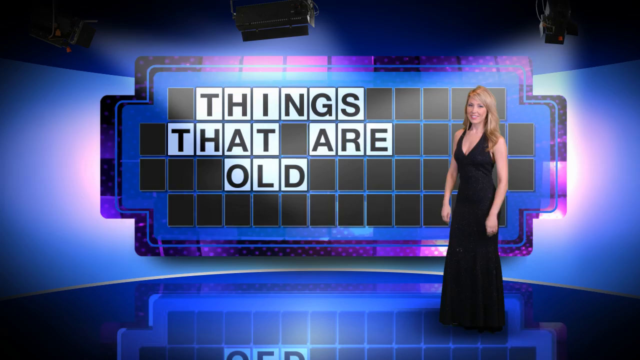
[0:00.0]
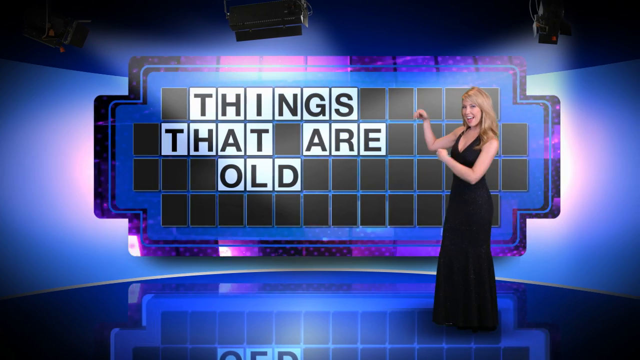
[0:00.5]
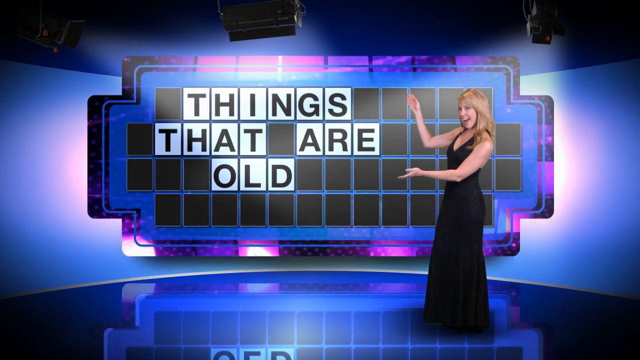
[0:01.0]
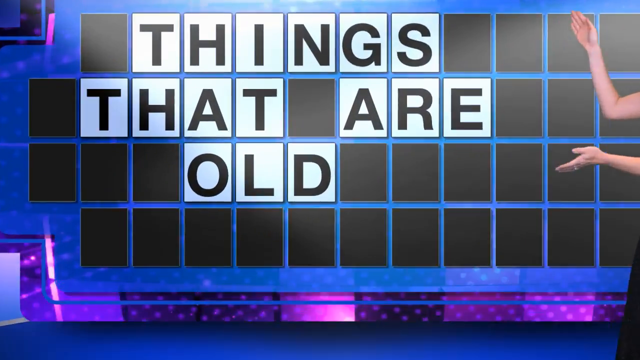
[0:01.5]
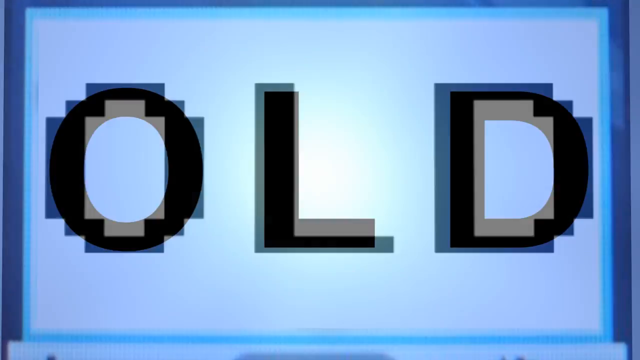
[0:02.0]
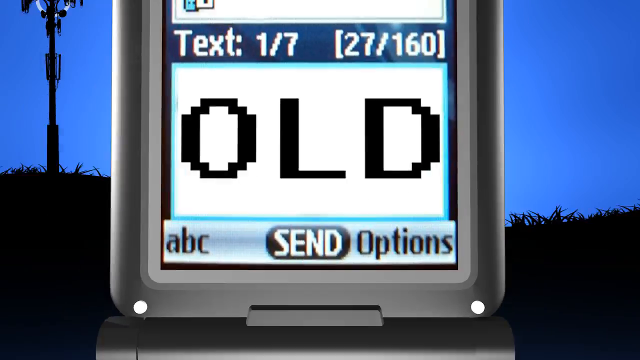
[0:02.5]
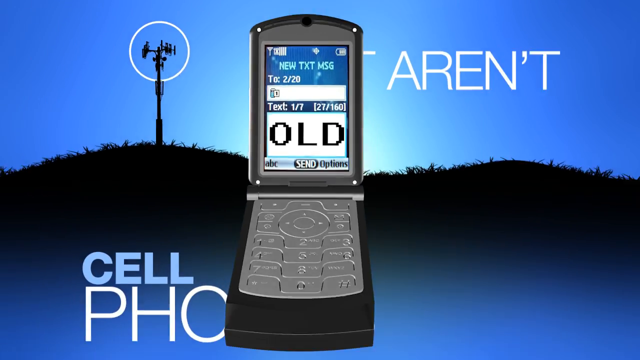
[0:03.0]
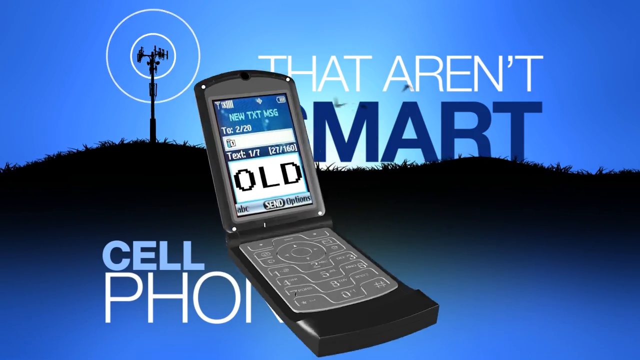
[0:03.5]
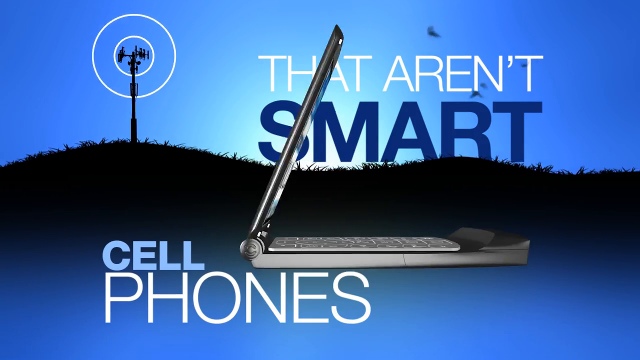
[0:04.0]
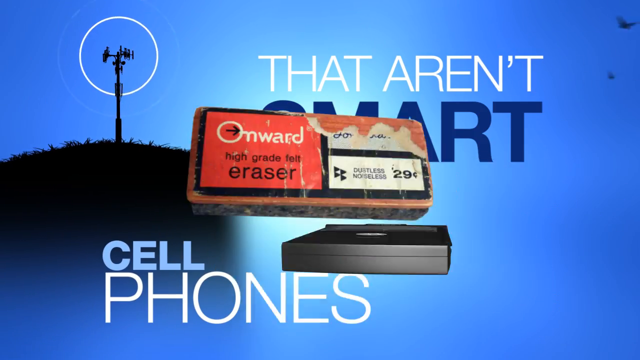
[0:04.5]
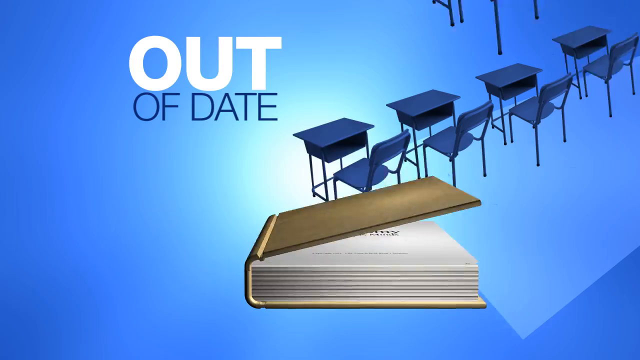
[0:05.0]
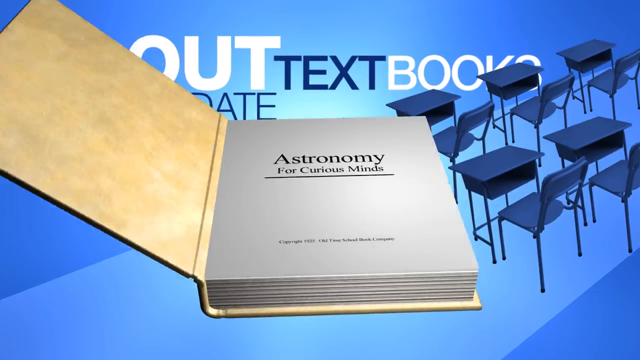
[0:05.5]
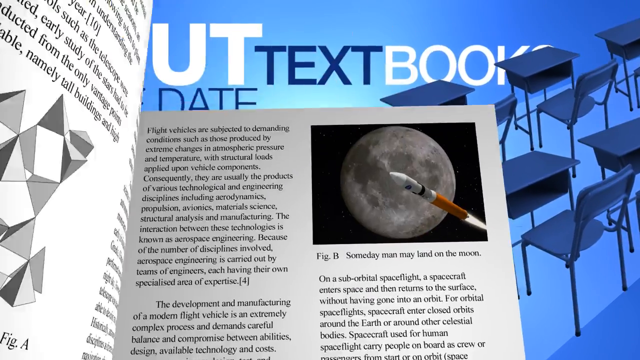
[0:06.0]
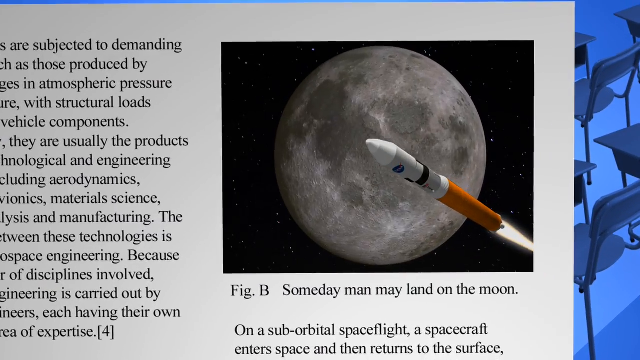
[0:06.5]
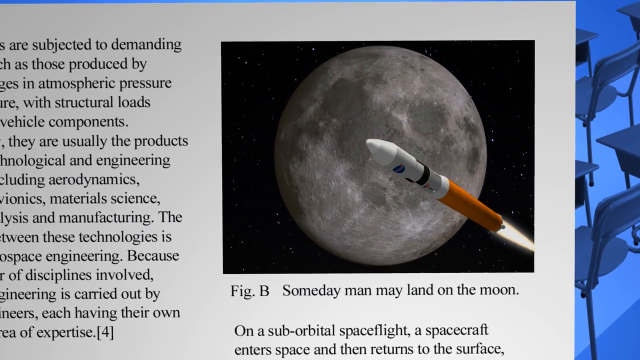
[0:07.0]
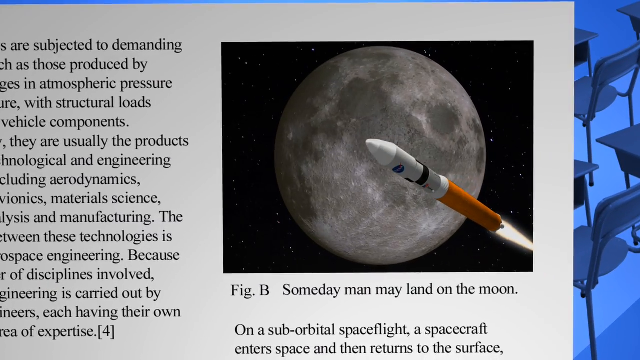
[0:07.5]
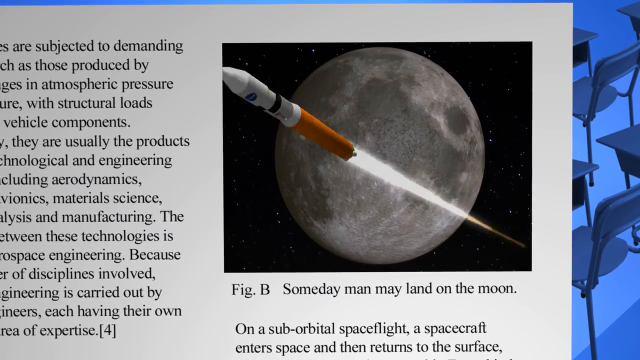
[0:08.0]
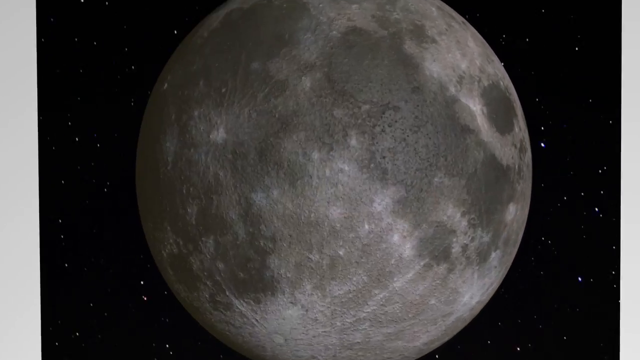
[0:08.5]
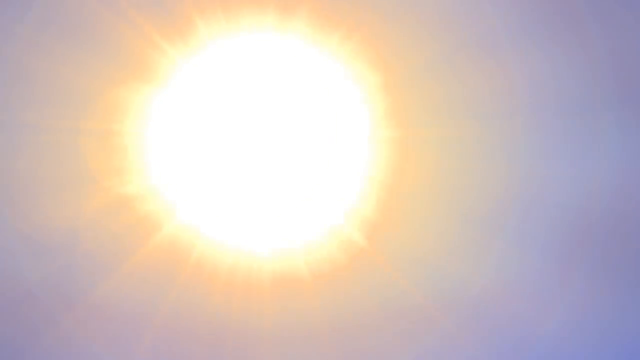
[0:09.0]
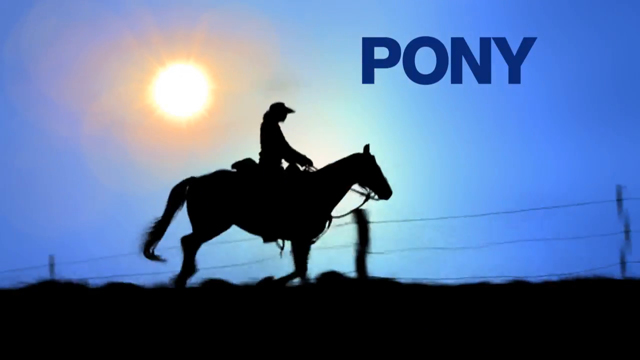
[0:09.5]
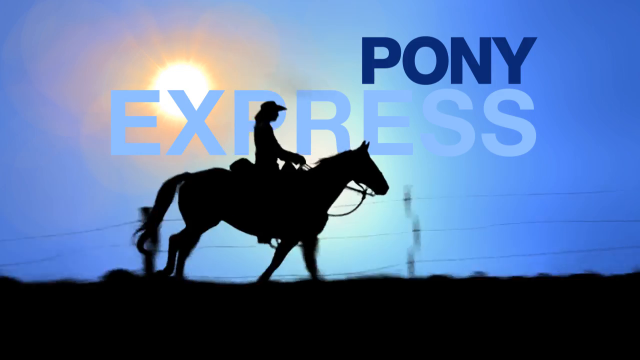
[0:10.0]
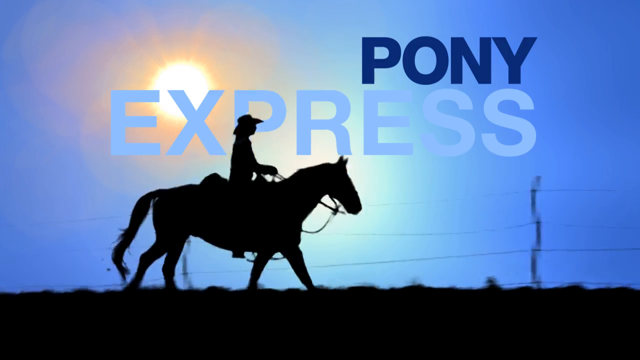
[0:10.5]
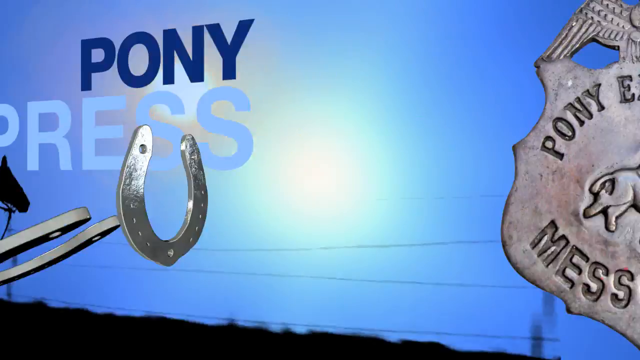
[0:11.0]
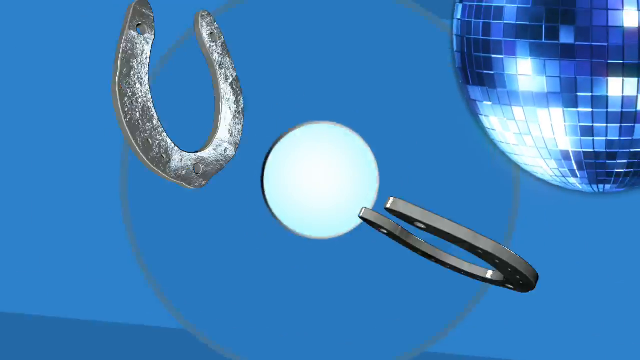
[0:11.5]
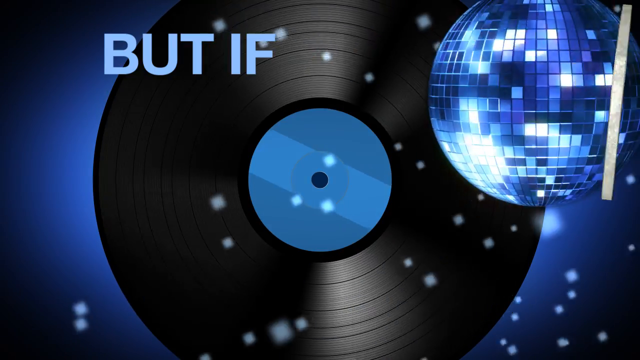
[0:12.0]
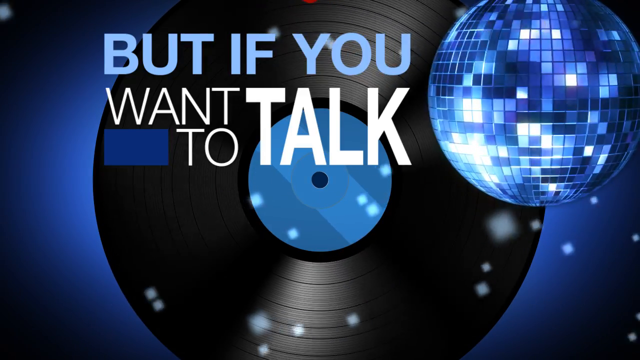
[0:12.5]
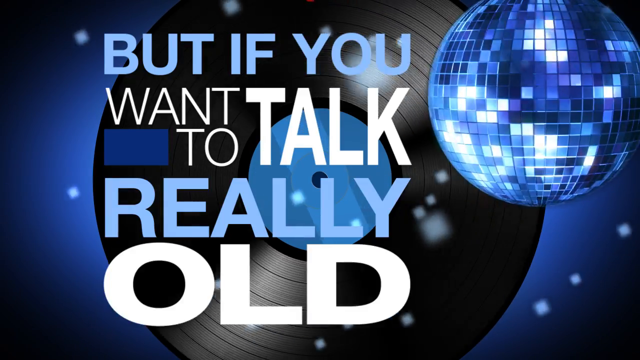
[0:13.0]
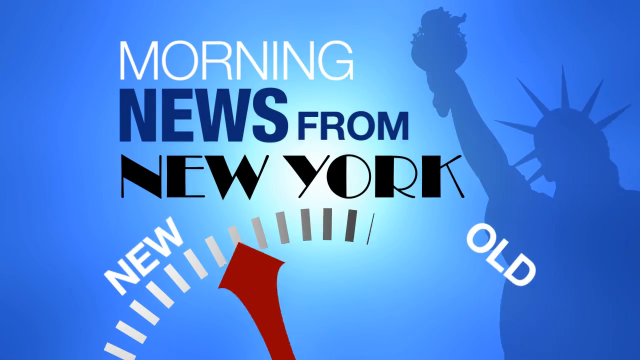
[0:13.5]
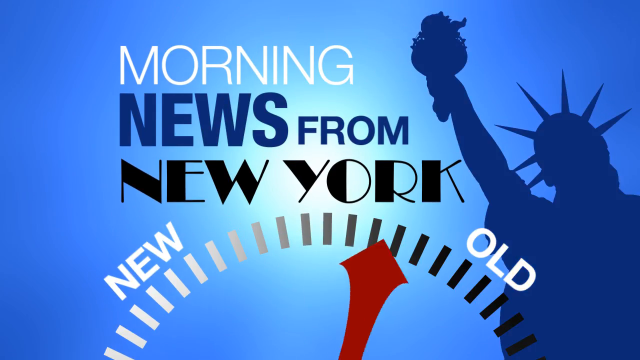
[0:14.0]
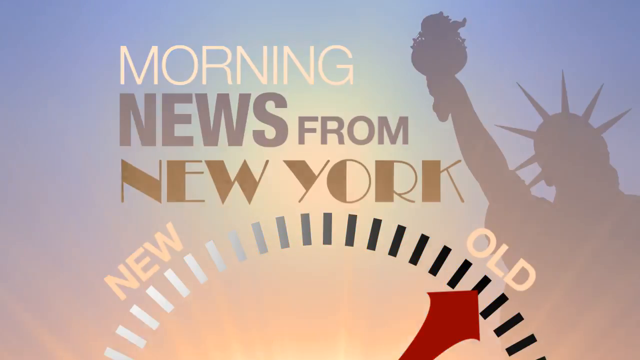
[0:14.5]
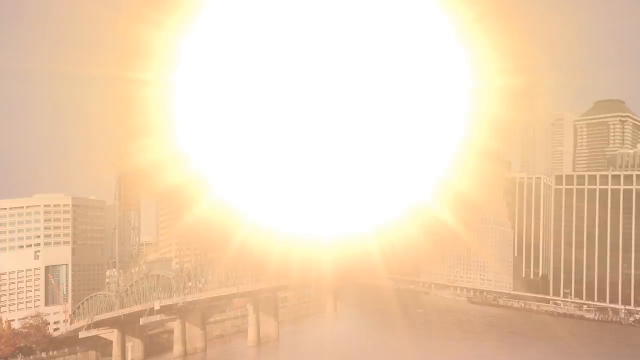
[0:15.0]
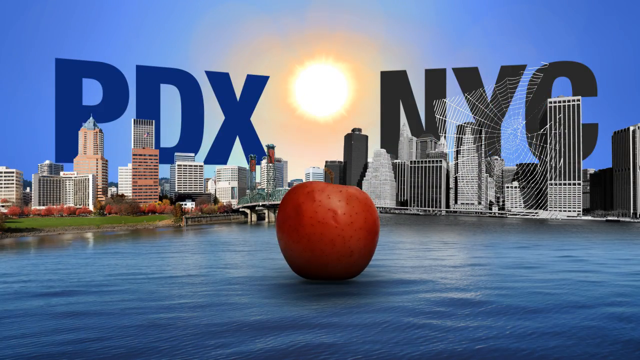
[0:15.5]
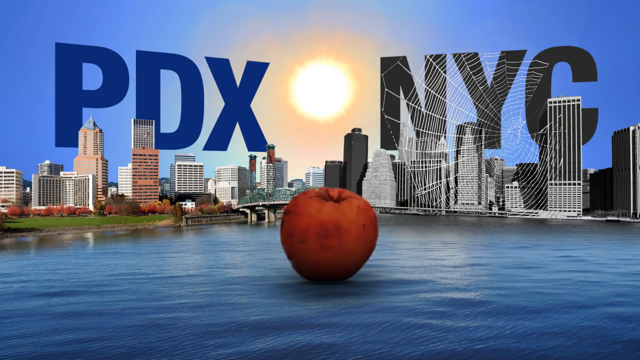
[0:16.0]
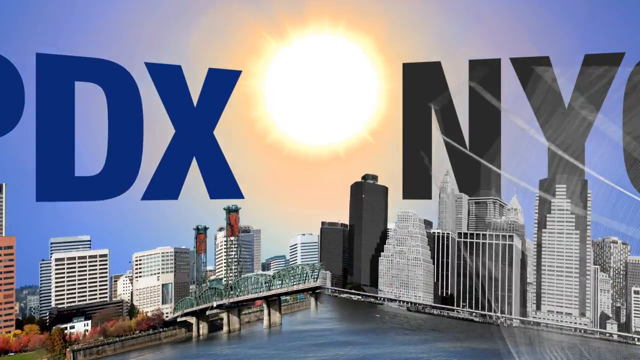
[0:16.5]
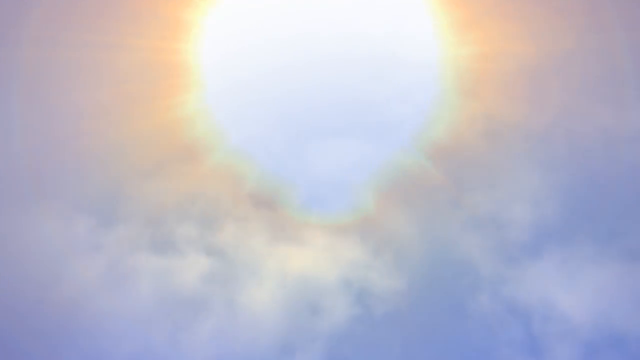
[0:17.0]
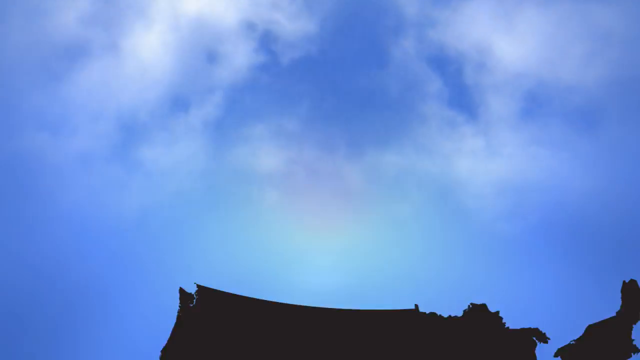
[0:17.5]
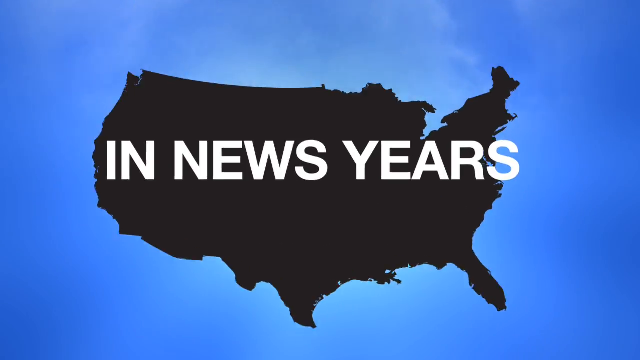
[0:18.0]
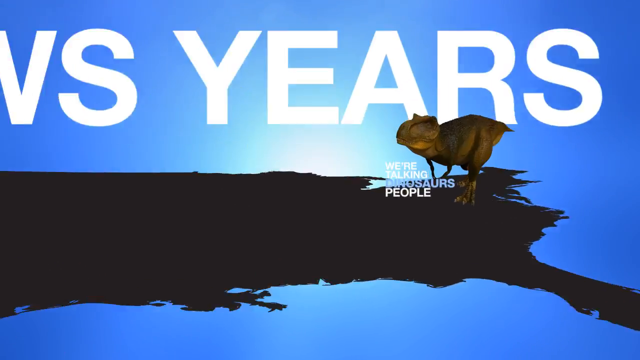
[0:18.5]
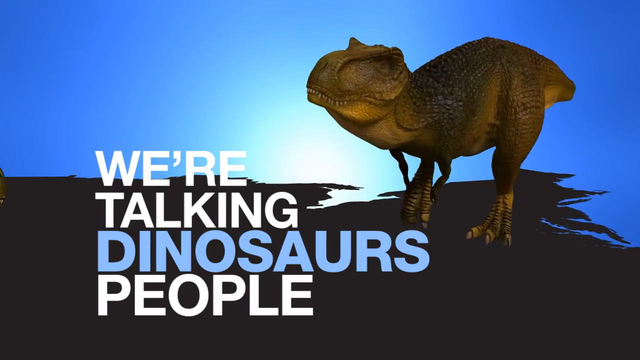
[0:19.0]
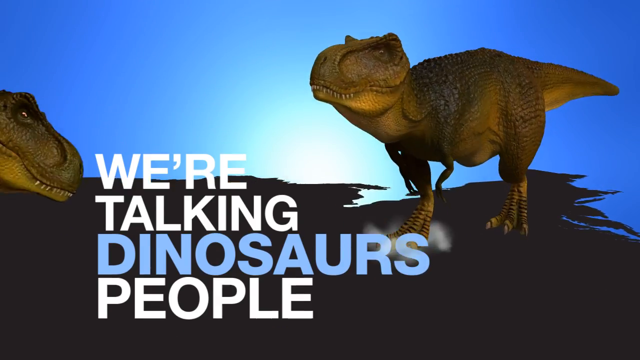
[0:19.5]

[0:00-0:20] A young woman with blonde hair spread around her shoulders stands wearing a black, long, sleeveless V-neck gown. She points her hand toward a screen, gesturing for the viewer to see it, and on the screen is "things that are old." A picture of an old phone appears, along with the shadow of a woman on a horse with a pony. Next come cell phones that are not smart, with "that aren't smart" shown, and an old phone like a Motorola that opens and closes. After that slides by, out-of-date textbooks for astrologers and for the curious appear, followed by chairs and a table. Then what looks like a missile is shot into the atmosphere. A young woman rides a horse, followed by a pony express messenger symbol with a bird on it. After that, text beginning "but if you want to talk" appears, with "New York" written and news from New York shown.